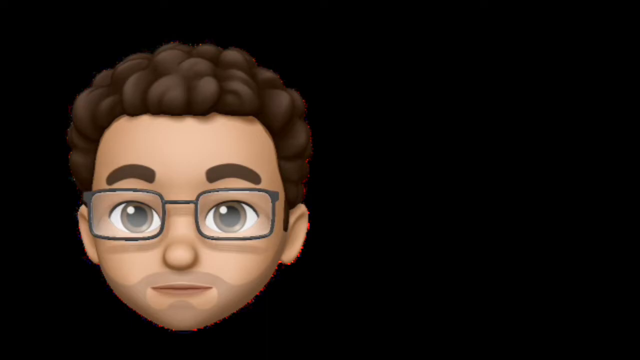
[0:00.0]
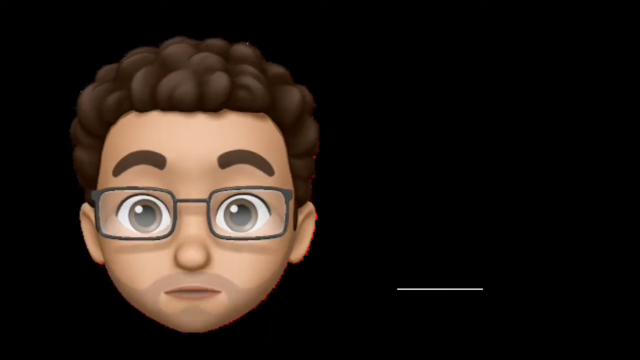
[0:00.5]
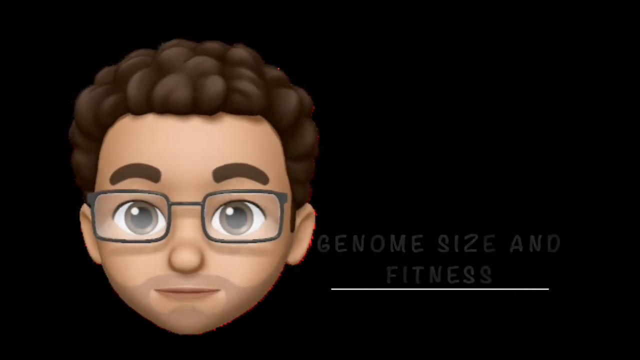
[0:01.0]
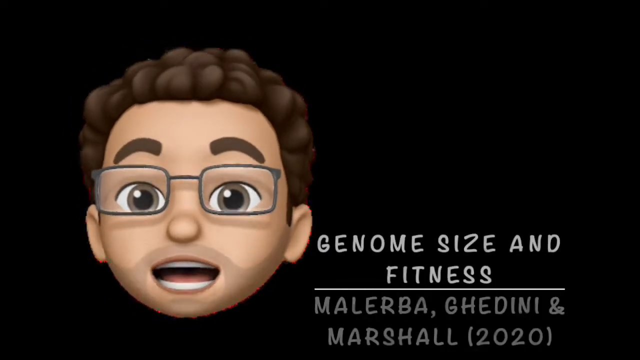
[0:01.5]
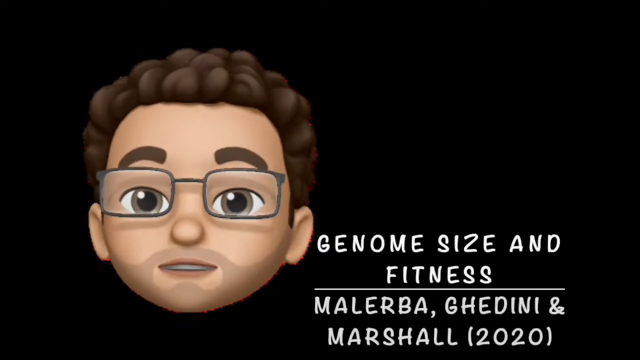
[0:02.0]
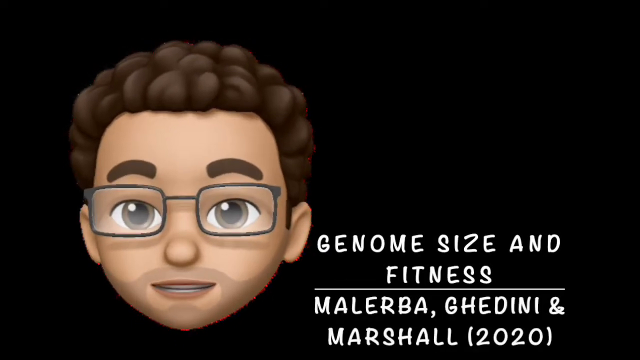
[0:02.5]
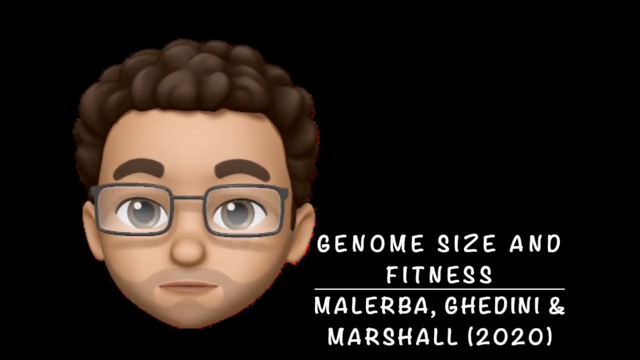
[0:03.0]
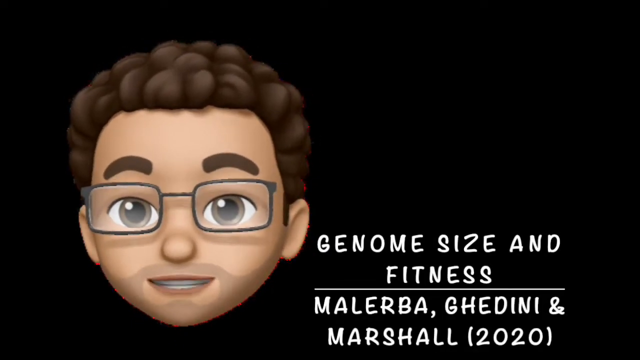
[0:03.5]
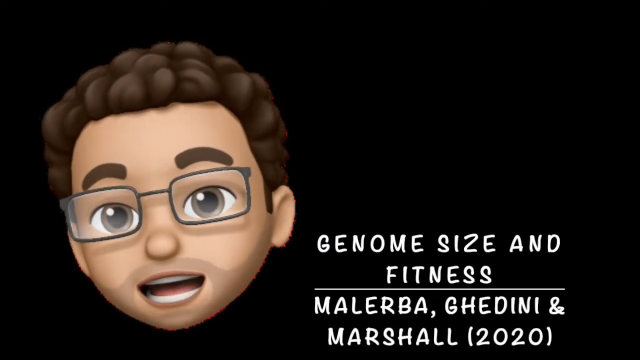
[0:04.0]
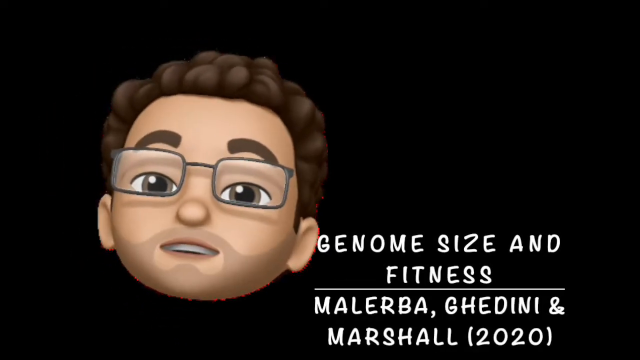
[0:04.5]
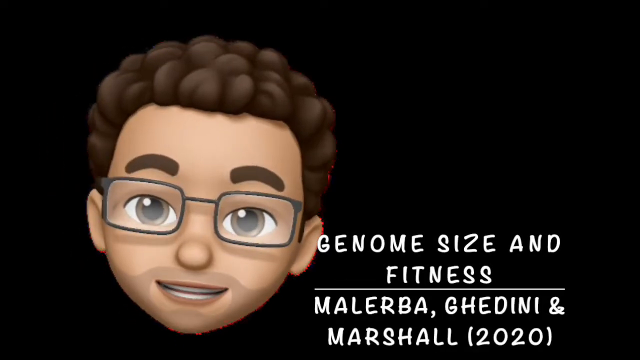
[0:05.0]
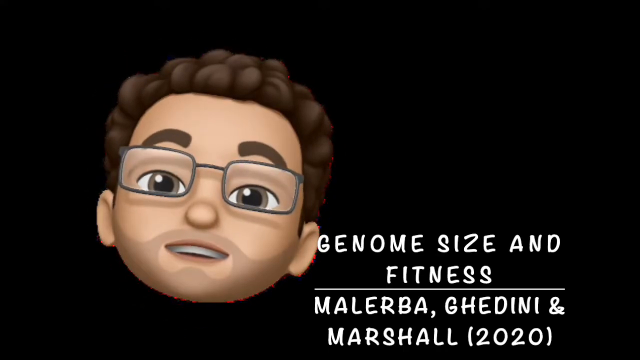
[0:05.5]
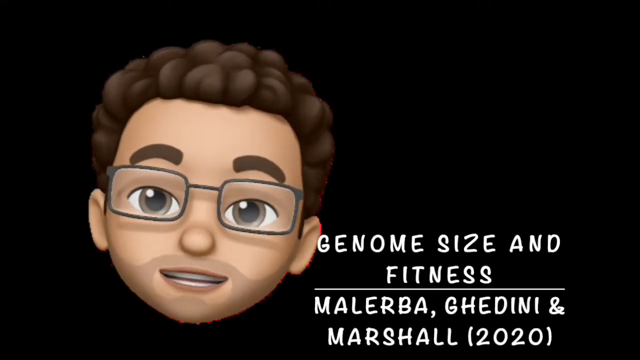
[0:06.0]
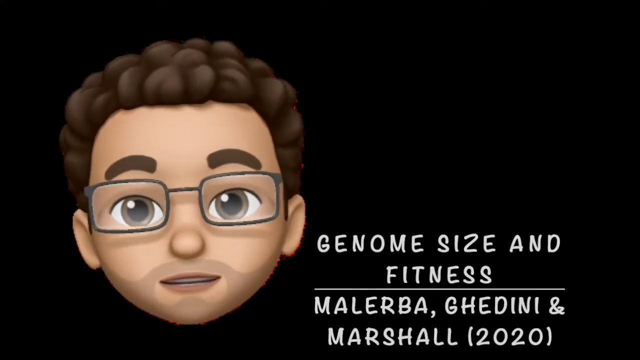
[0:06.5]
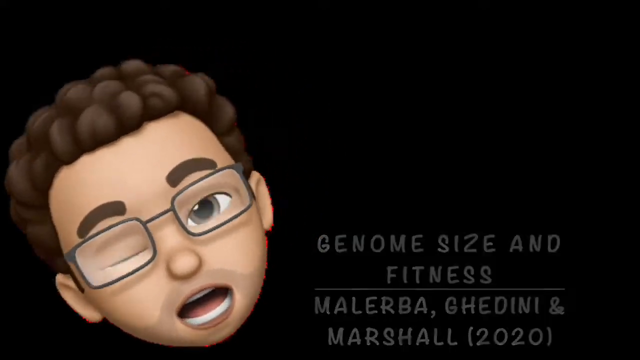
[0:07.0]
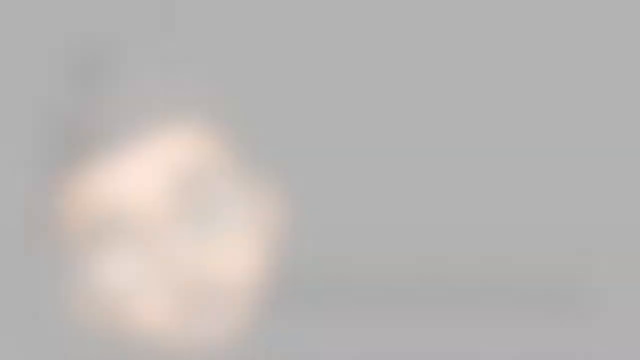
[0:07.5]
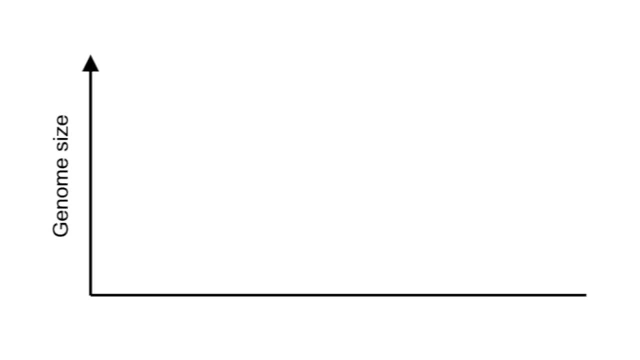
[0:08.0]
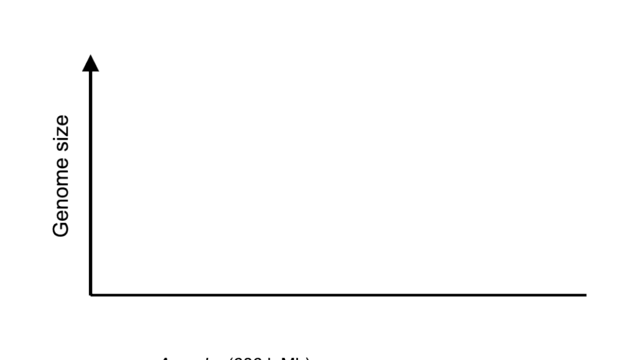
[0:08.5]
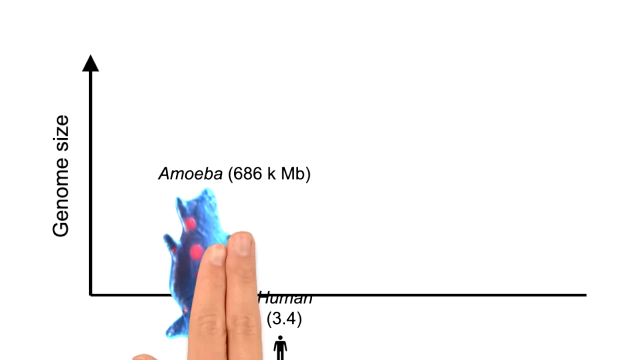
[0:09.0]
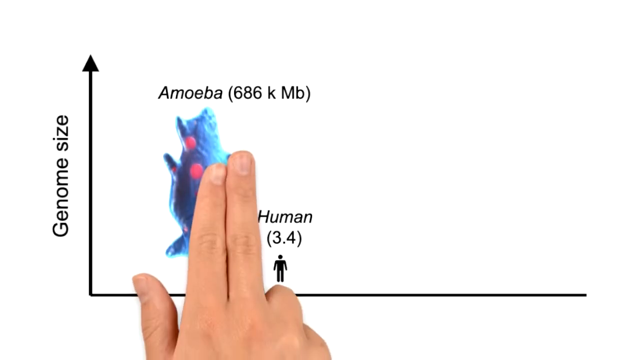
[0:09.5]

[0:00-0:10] The video opens on a black screen with a 3D animation of a man on the left side. Only his head is shown: he has short, curly brown hair, brown eyes and a five o'clock shadow, and he wears glasses. He faces a screen and begins to talk, his eyebrows moving up and down. On the right side of the screen is the text "genome size and fitness" with a white line under it, followed by "Malbara, GHEDINI and Marshall" and "(2020)". The view then changes to a white screen with an arrow that comes from the right side of the screen and curves up toward the top, making roughly a 90-degree angle on the left side. It is labeled "genome size".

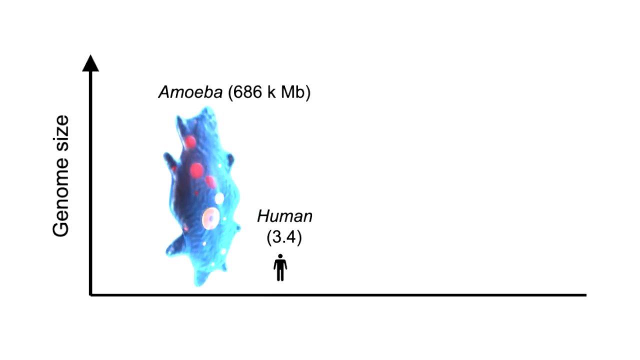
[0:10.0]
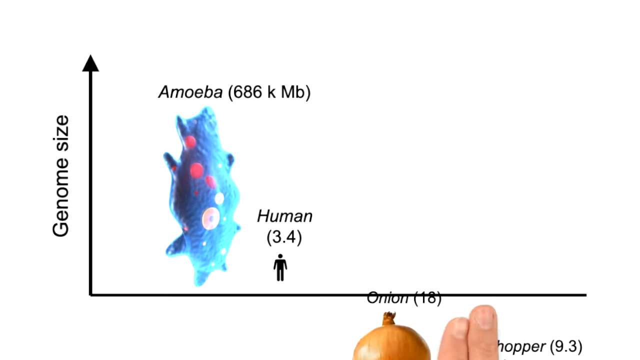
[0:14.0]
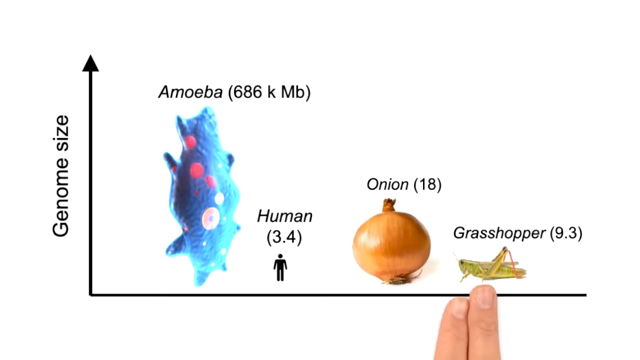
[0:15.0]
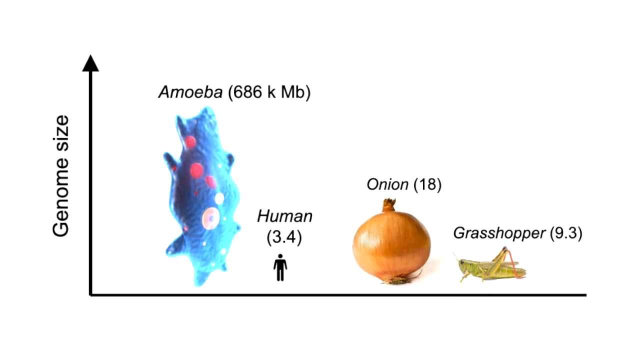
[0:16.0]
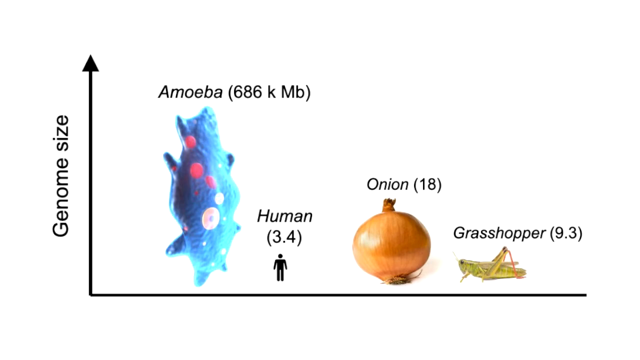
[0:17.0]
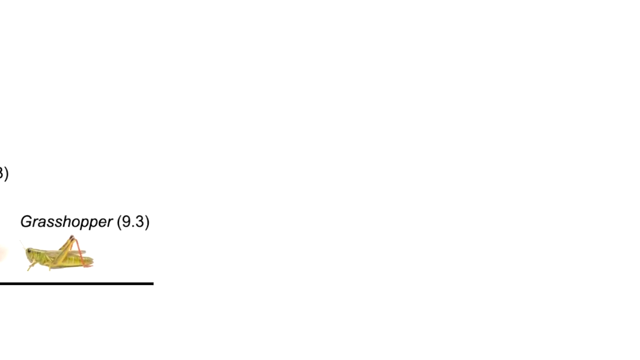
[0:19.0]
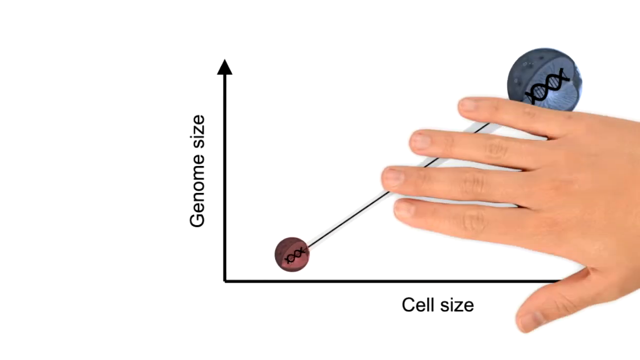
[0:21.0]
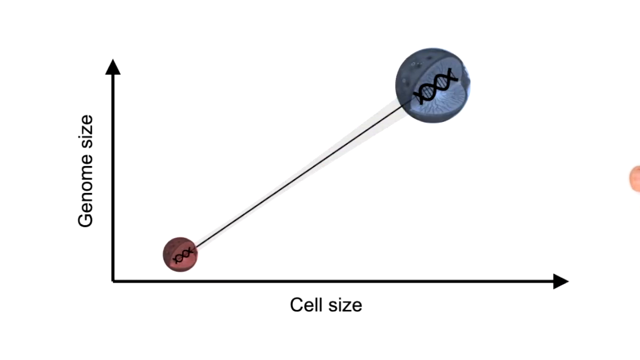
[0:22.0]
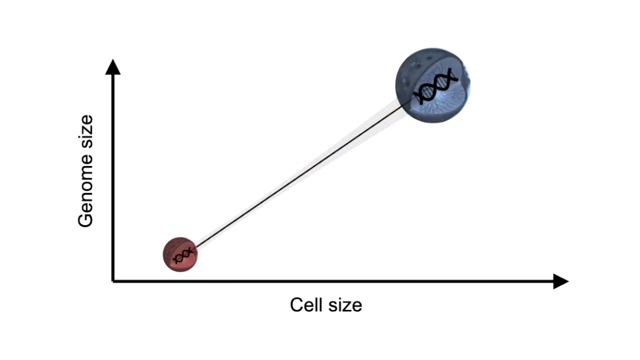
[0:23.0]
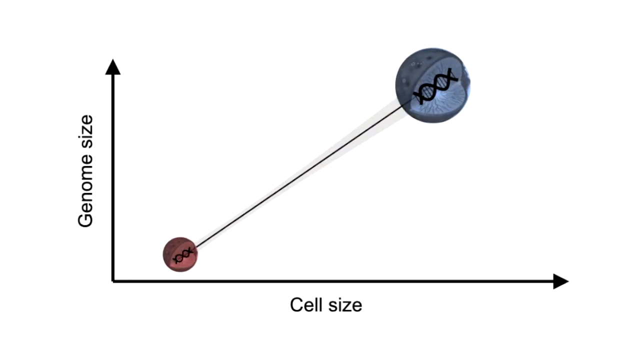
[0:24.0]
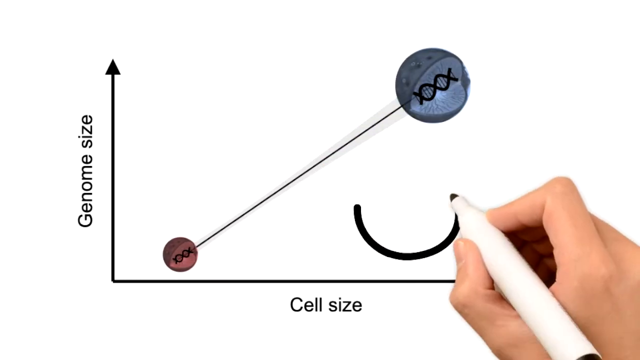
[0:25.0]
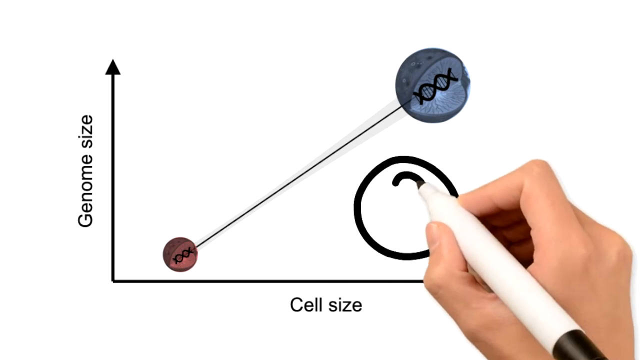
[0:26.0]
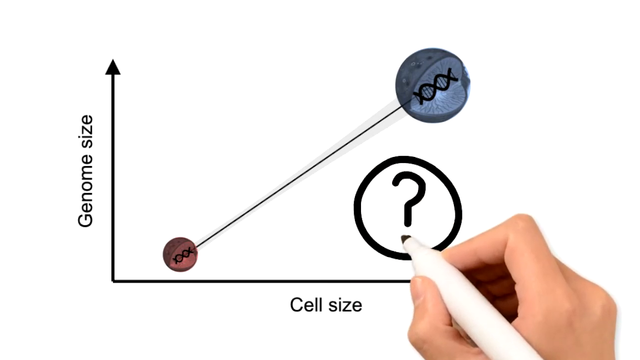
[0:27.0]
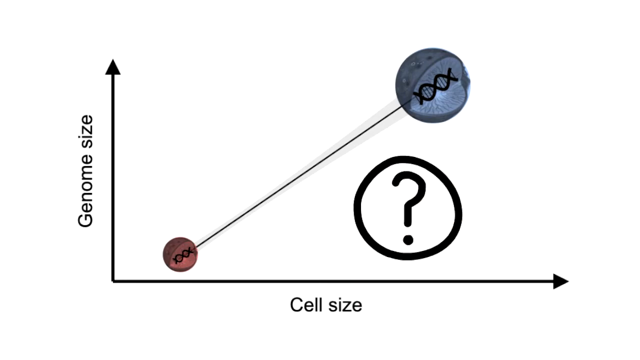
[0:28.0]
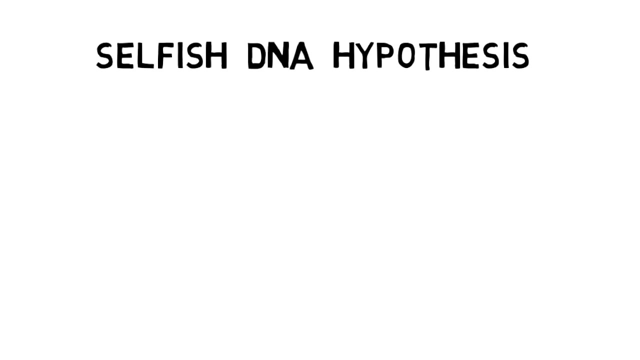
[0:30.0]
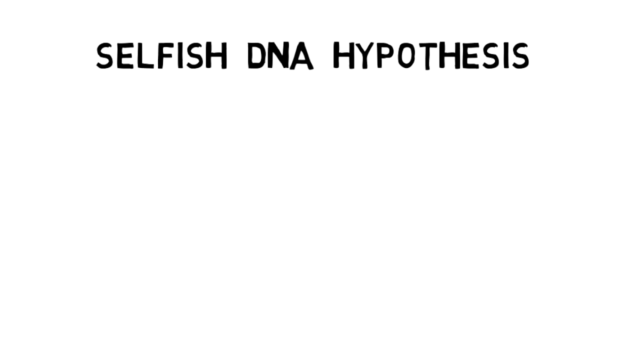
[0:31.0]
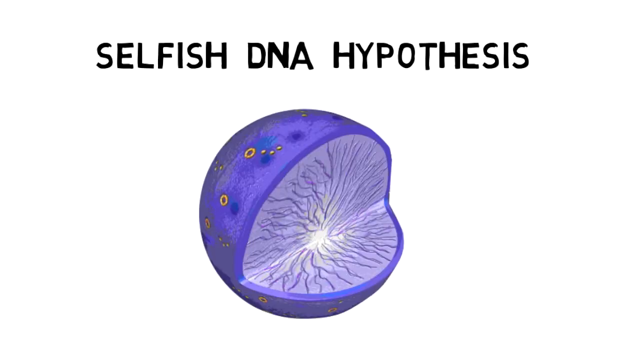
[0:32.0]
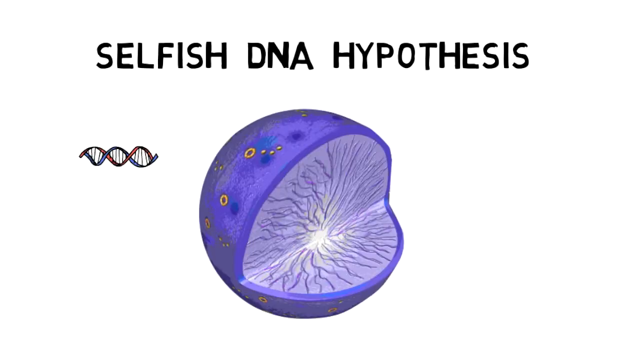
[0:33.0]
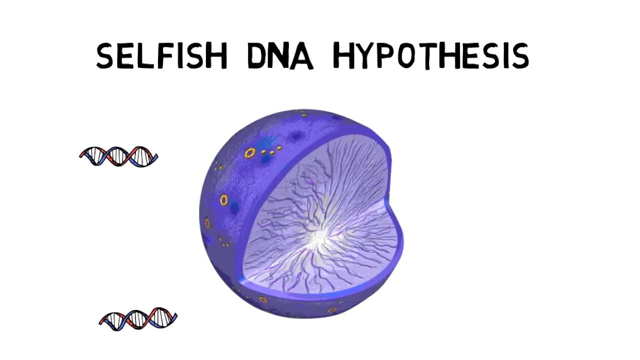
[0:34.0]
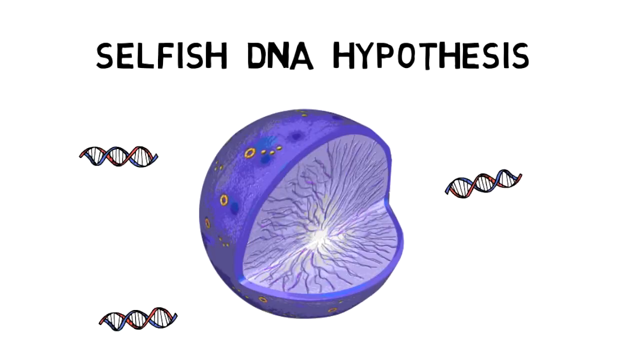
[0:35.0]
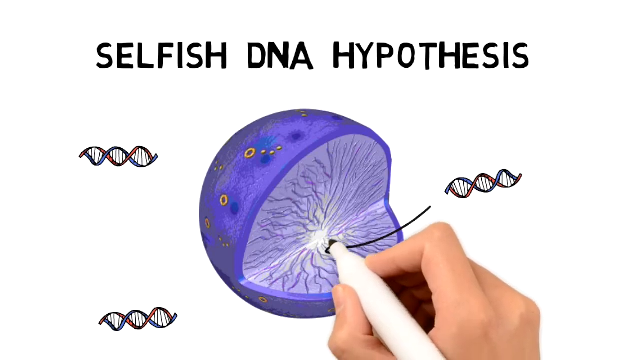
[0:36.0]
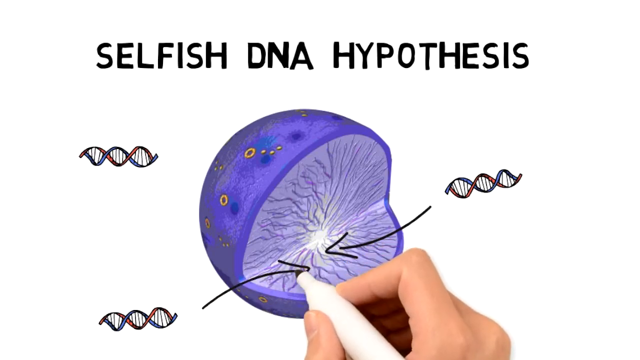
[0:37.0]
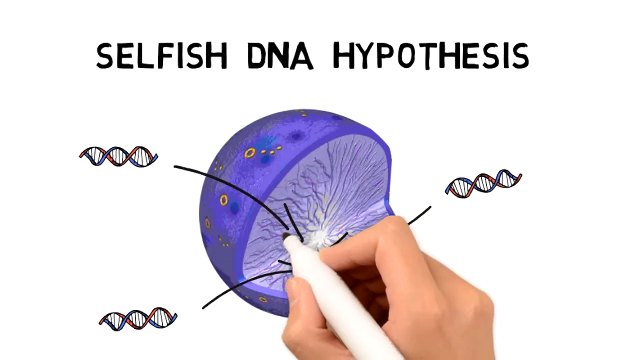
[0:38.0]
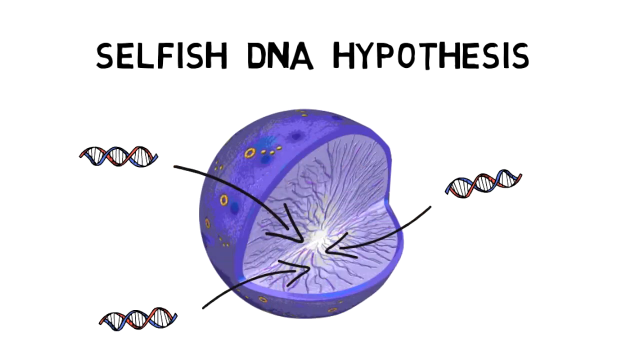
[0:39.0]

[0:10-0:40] On the white screen, a black line goes across the bottom and makes a 90-degree angle up toward the top of the screen on the left side. To the left of the arrow, "genome size" runs from bottom to top. Within the arrow is a picture of an amoeba, blue with red dots, with "amoeba" above it and "(686 KMB)". Below that, to the right of the amoeba, is "human" with "(3.4)" and an illustration of a person below the number. A right hand comes up, with the index and middle fingers together, the other two fingers down and the thumb out, and slides an onion and a grasshopper next to the human. Above the onion is "onion (18)", and to the right of the onion is the grasshopper, labeled "grasshopper (9.3)". The image slides to the left, leaving a white screen, and a right hand slides another image in from the right: another arrow with a 90-degree angle, labeled "genome size" on its left side. It contains what looks like a small red dot and a line that goes up toward the top right to a blue dot; both dots have a double helix going through them. At the bottom is "cell size". A hand draws a circle with a question mark in it. Next is a white screen reading "selfish DNA hypothesis", showing a cell that has been split open, purple with light purple on the inside, with DNA strands around it. The right hand draws arrows into the center of the cell.